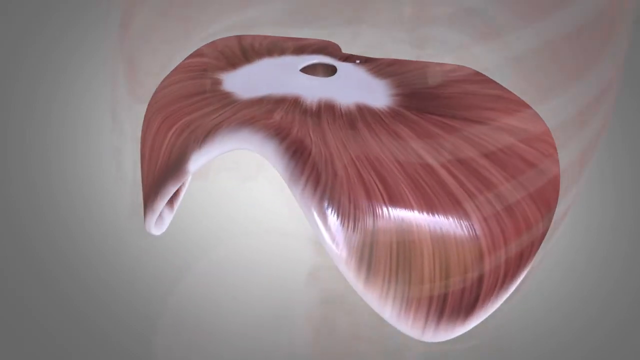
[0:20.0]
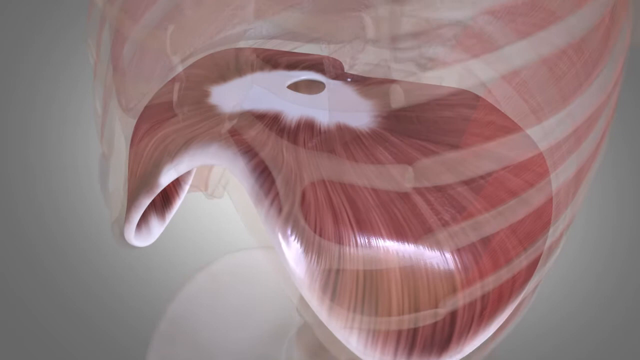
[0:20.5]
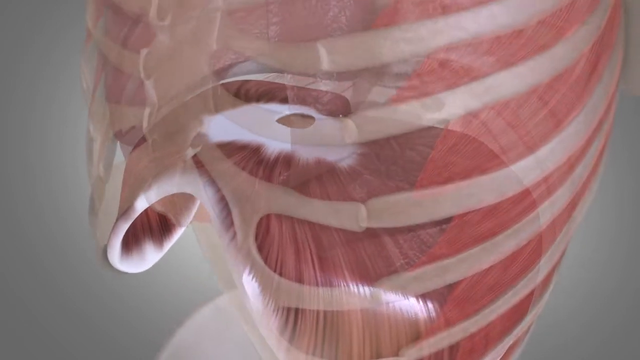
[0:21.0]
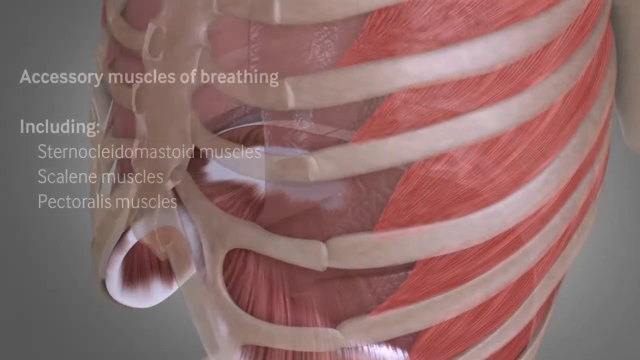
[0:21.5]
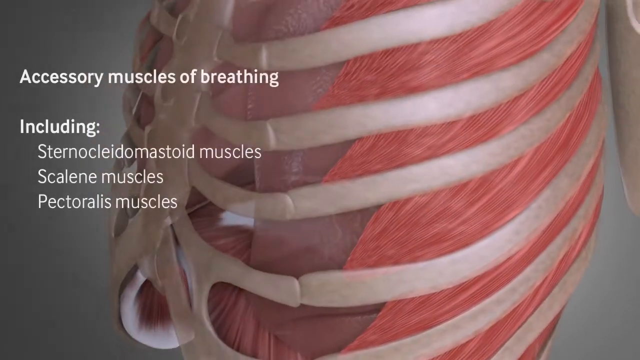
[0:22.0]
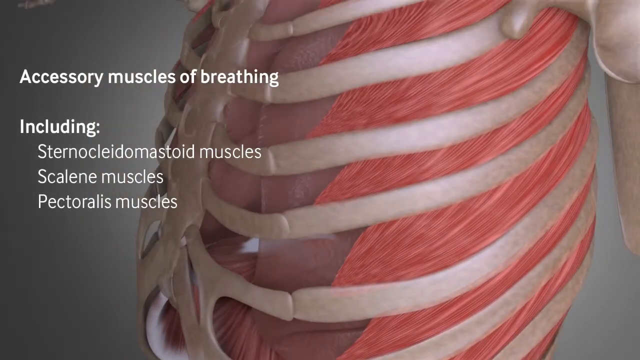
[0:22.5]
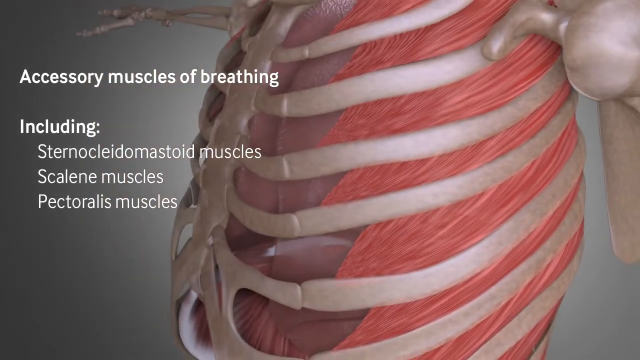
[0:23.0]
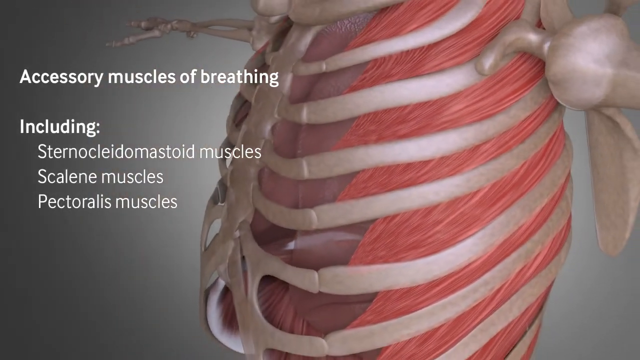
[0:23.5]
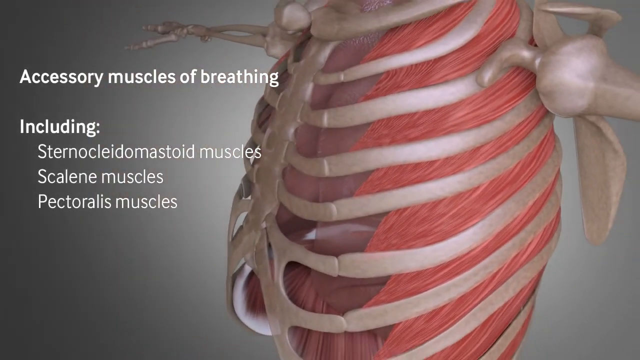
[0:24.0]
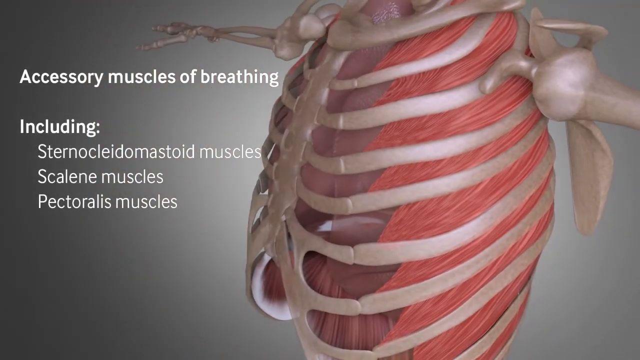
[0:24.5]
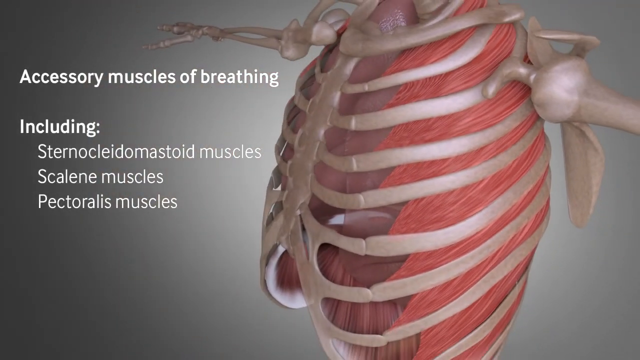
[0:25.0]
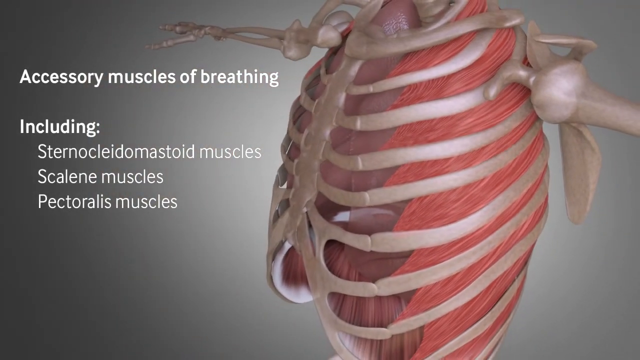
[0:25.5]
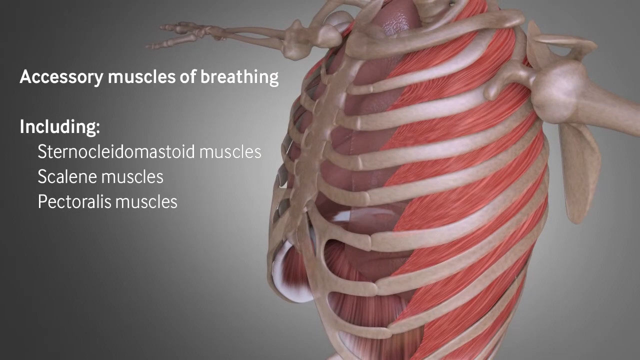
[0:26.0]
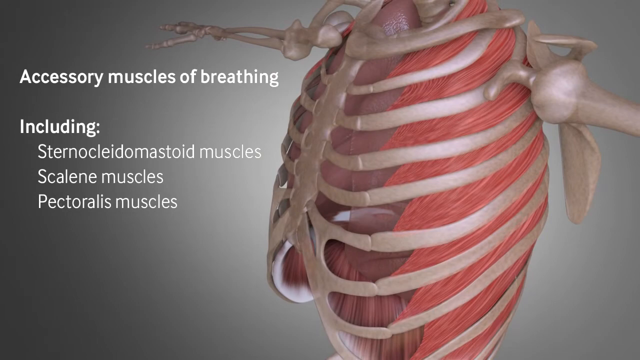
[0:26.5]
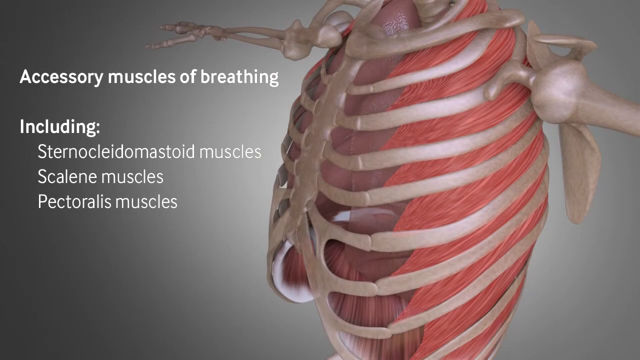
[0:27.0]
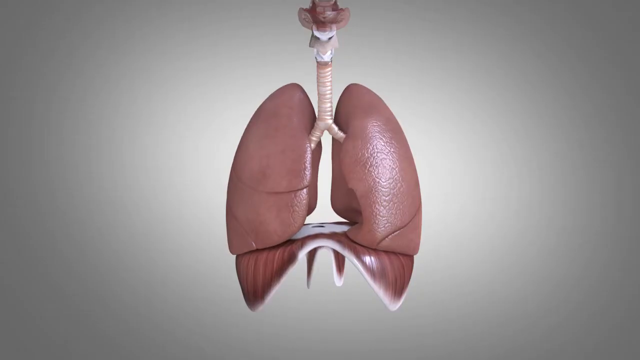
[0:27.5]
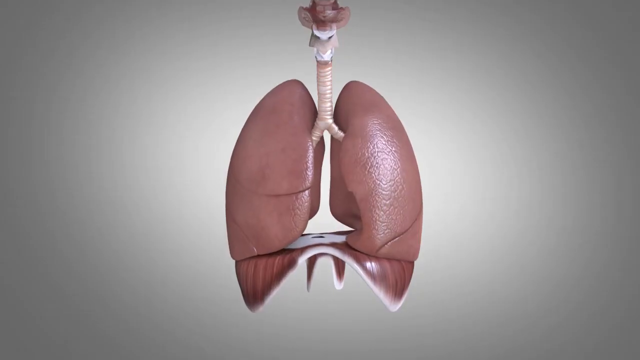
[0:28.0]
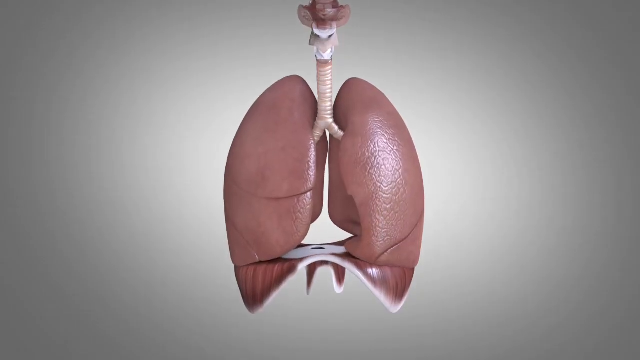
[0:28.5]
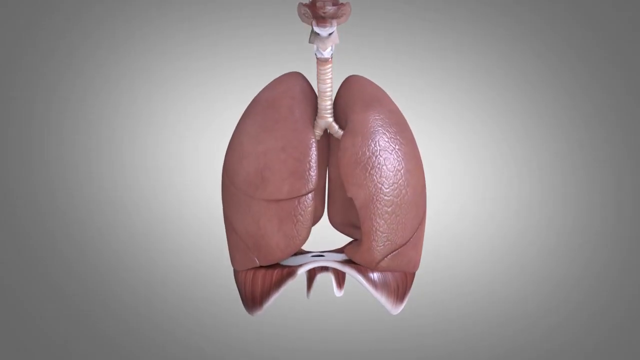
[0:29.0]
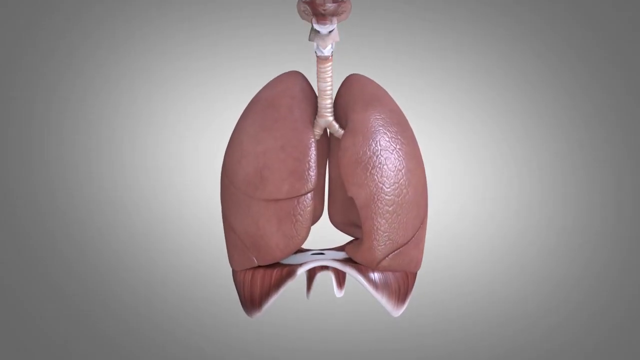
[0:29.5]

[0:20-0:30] A CGI animation shows the muscles and lungs inside the human ribcage. The camera pans around what looks like a human ribcage with pink muscles inside it. Text appears on the screen that says "Accessory muscles of breathing, Including: Sternocleidomastoid muscles, Scalene muscles, Pectoralis muscles." The camera appears to pan around the skeleton model and pull away from it slightly, so the arms of the skeleton are visible extended on either side of the chest. Then a graphic that looks like a pair of lungs appears; they are pink, with a white windpipe extending down from the throat, and they appear to be expanding and contracting.